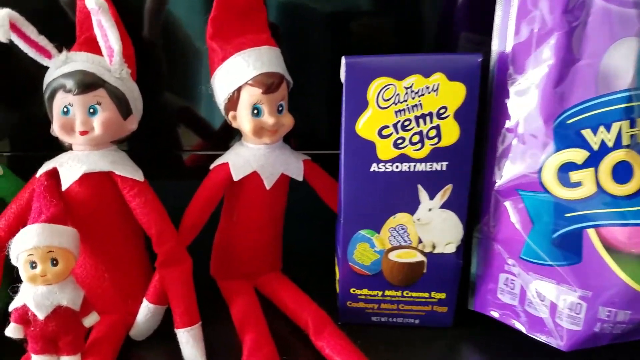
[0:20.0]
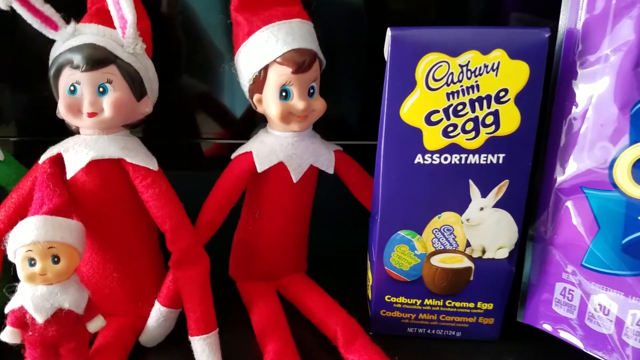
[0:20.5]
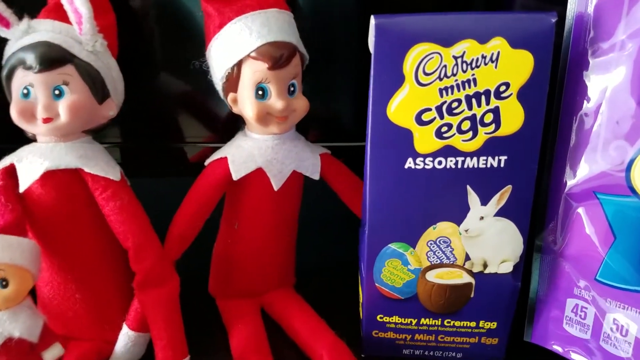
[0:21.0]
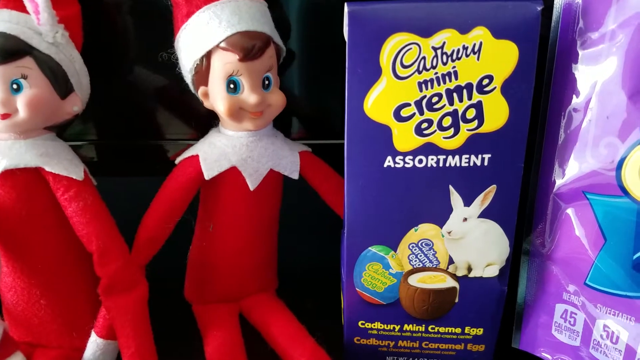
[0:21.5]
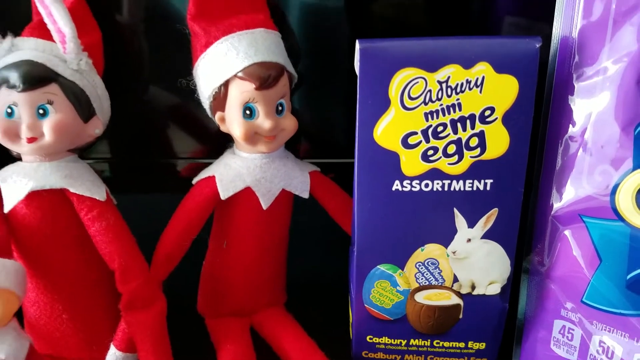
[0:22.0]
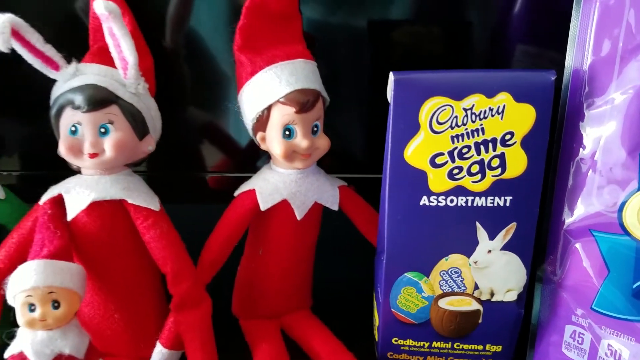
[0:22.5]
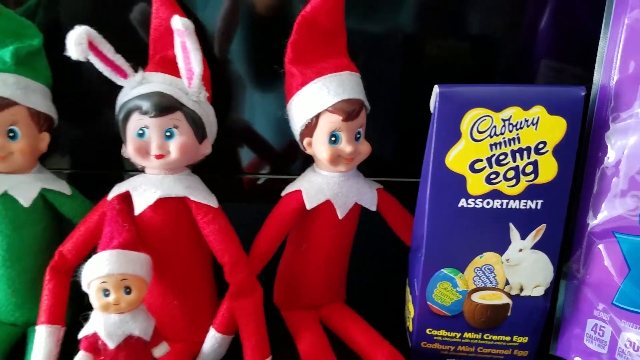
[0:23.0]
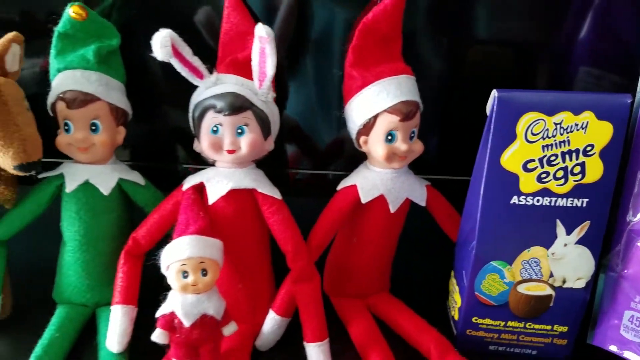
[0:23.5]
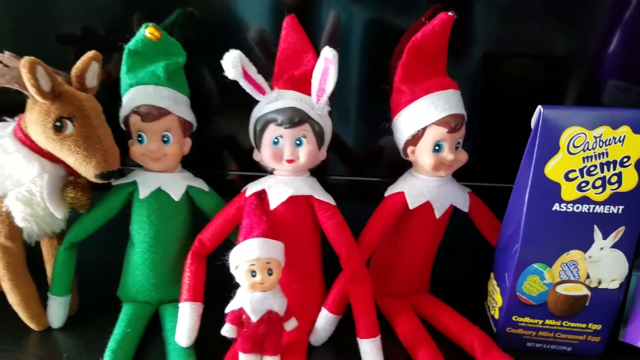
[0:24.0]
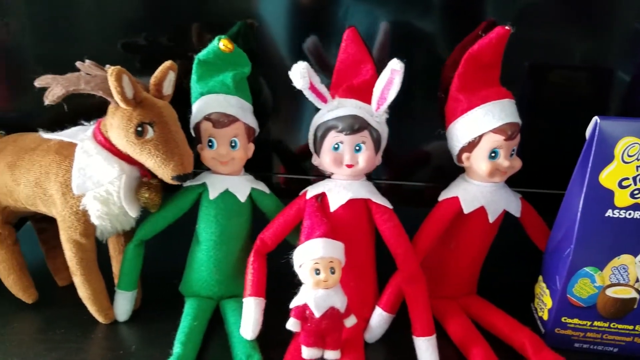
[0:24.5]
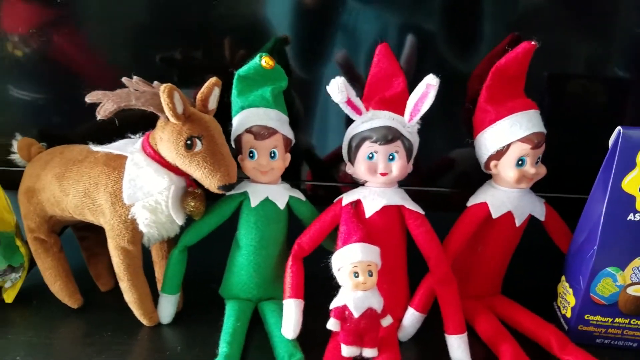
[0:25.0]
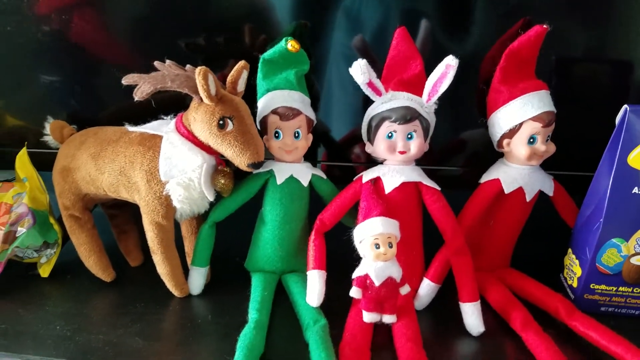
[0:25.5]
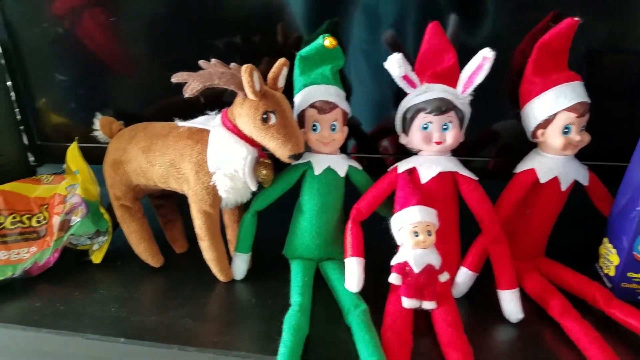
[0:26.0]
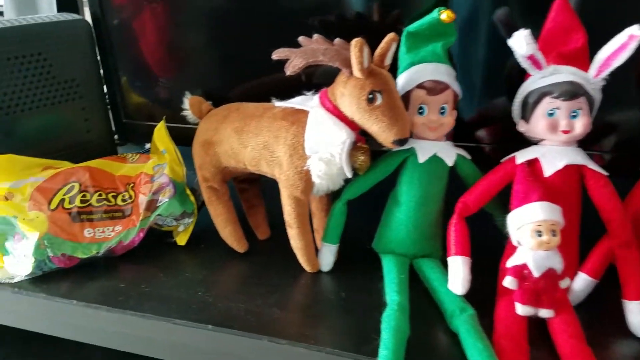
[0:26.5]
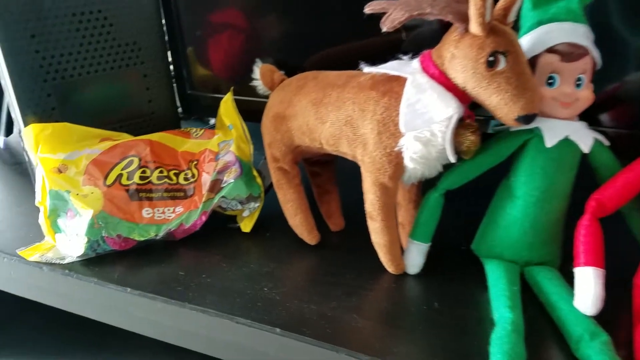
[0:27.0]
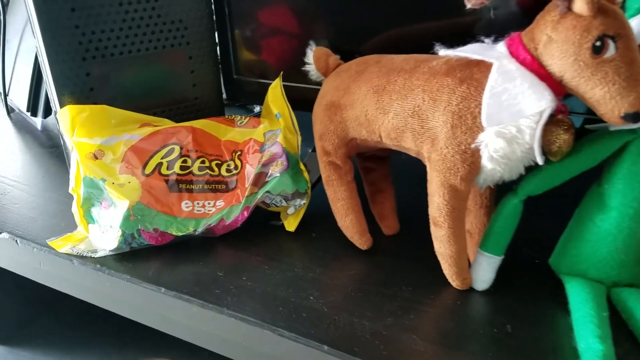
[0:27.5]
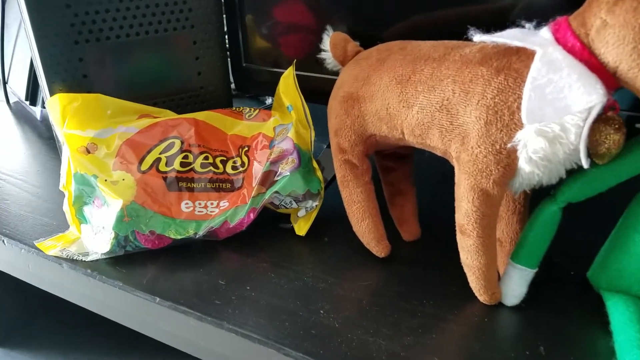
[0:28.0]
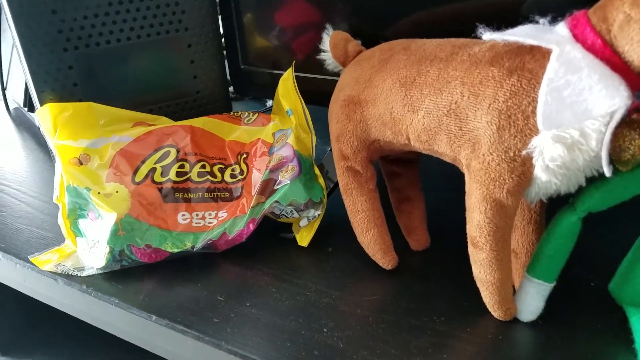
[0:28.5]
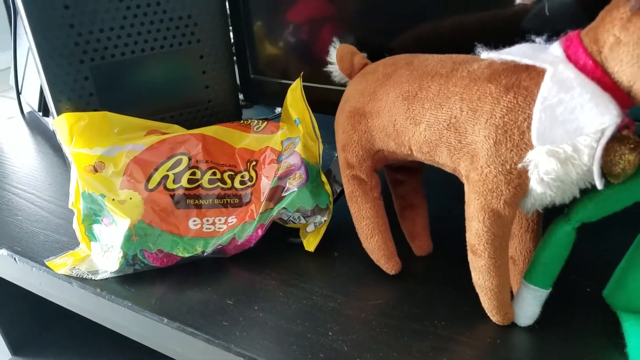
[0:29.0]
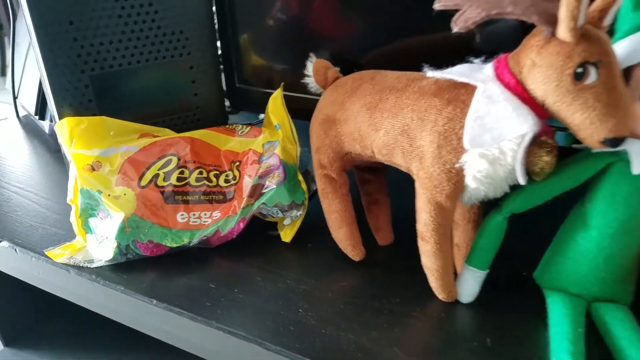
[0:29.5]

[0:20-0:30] Two Elf on the Shelf toys in red outfits wear Santa hats. The one on the left also has white bunny ears, and they are holding a small baby with a red Santa hat on. To their right is a purple rectangular box of Cadbury mini cream egg assortment, and to the right of that is a larger, light purple bag. The camera pans a bit to the left, revealing another Elf on the Shelf toy in a green outfit, and next to it a small light brown stuffed reindeer. To the left of that is packaging for Reese's peanut butter eggs, and the camera kind of zooms in on this bag a little.